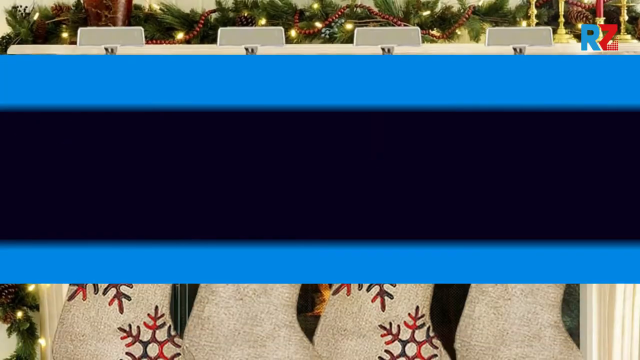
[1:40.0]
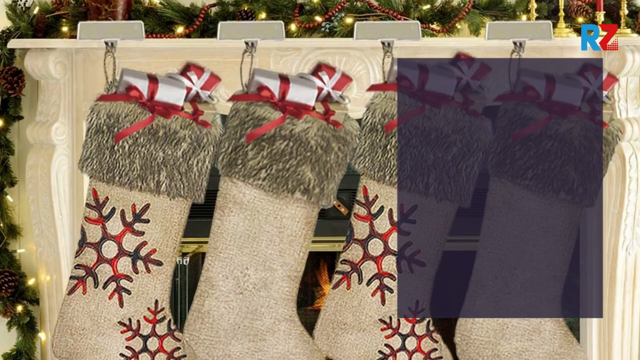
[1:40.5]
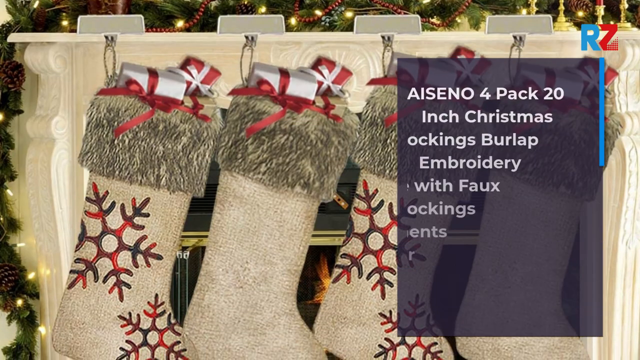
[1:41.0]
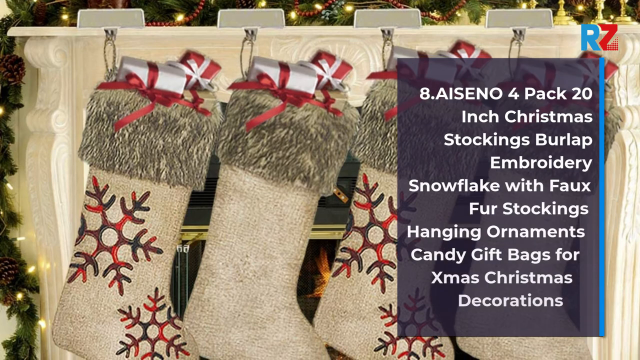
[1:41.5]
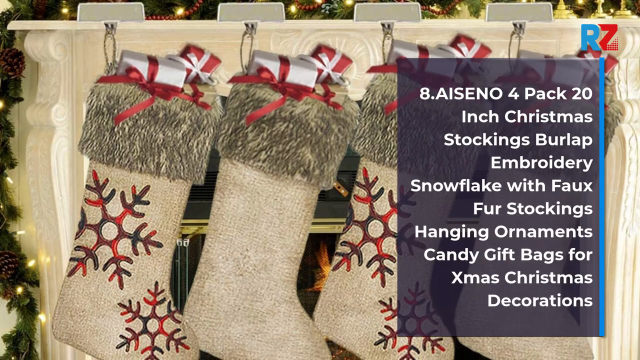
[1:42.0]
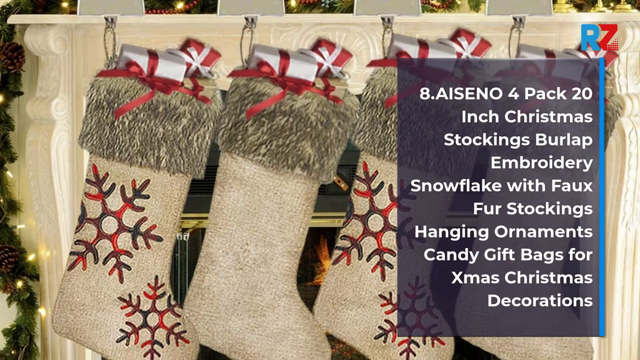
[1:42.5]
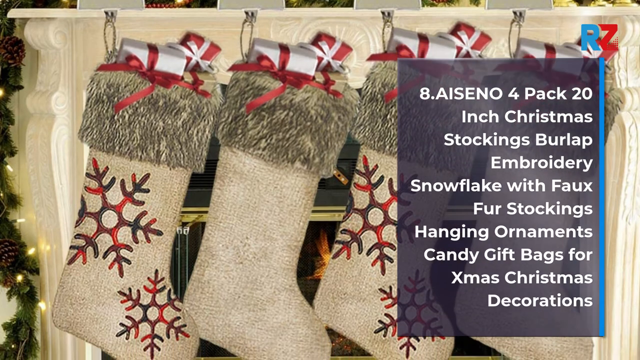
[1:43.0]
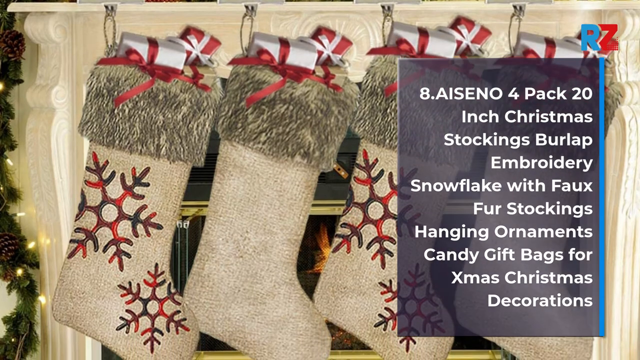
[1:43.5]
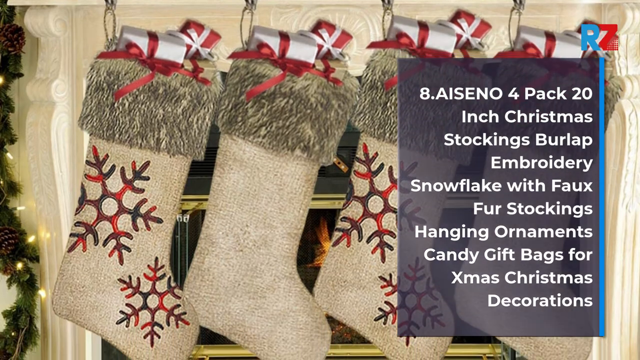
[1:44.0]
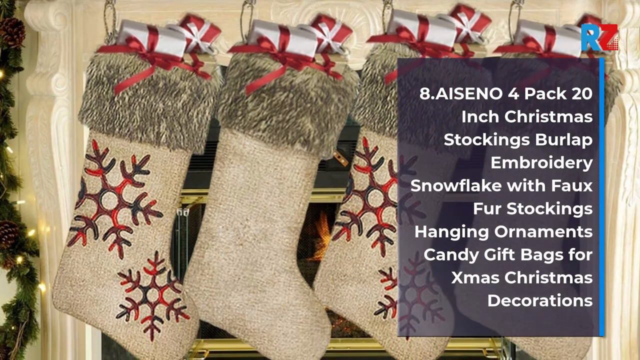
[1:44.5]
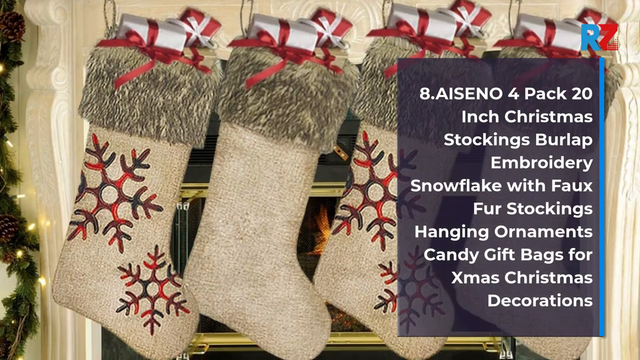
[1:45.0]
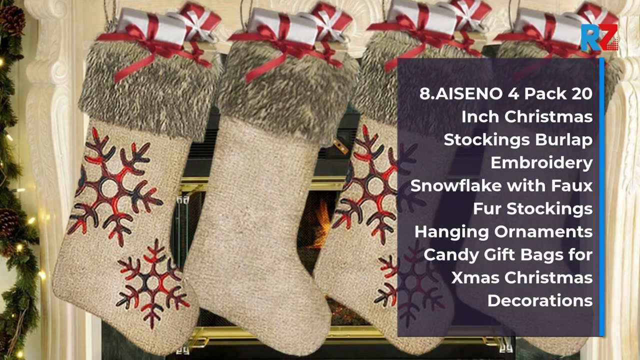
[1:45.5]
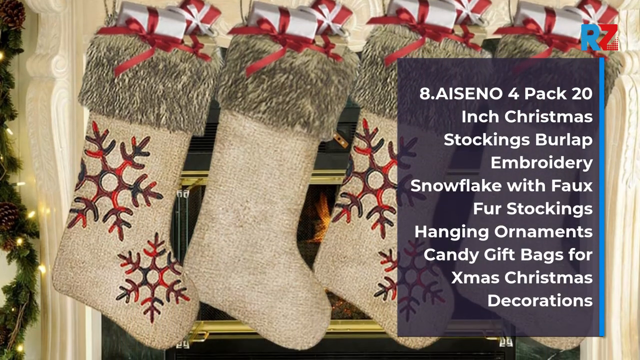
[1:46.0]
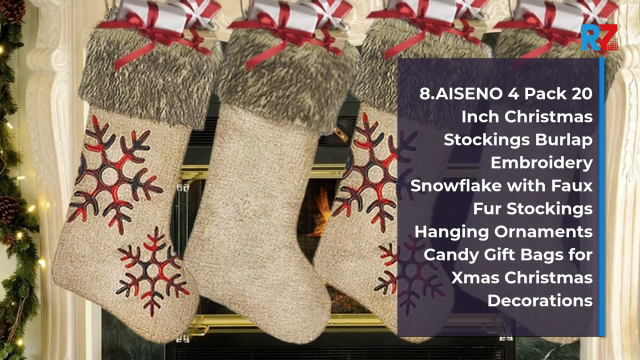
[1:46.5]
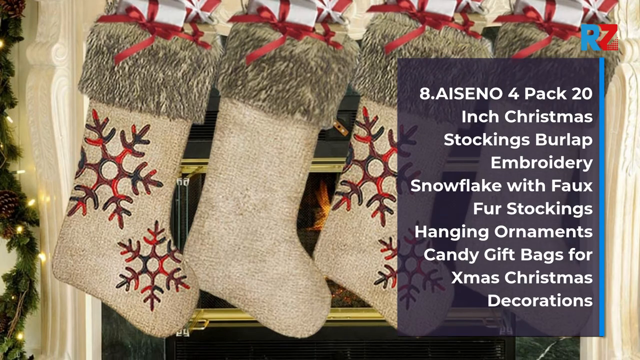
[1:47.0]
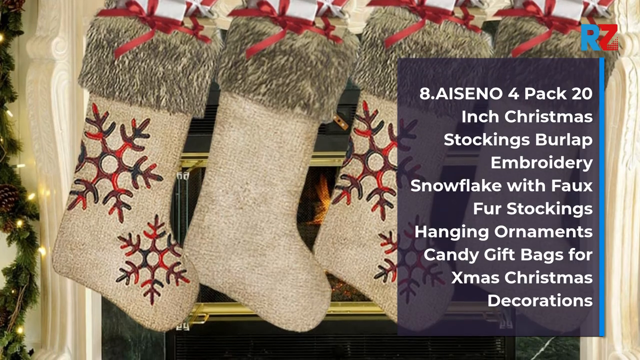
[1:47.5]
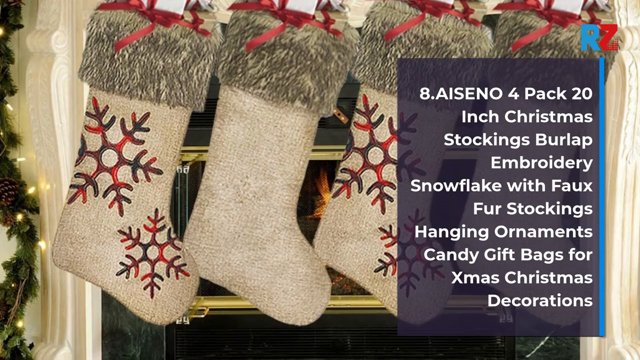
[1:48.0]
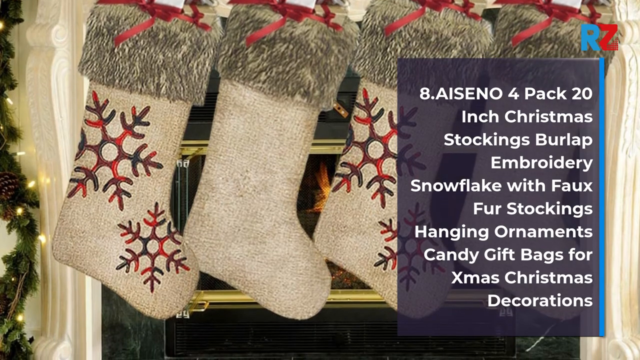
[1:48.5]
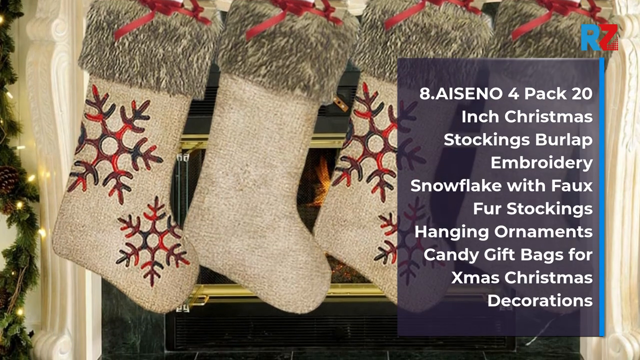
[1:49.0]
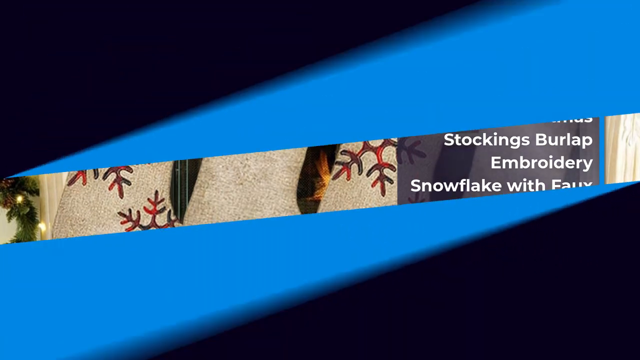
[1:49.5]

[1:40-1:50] Number eight is the Isenno four pack 20 inch Christmas stockings, burlap embroidery snowflake with fox fur, hanging ornaments, candy gift bags for Xmas decorations. They look gold and look like they are made out of hay. The fake fur on top looks kind of like a wolf's wool. The snowflakes are in Christmas colors, dark red and dark green. Number 6 is a Le Pepe Christmas stocking set of 4 large Xmas stockings, 18 inch, Christmas tree decoration with Santa, snowman, reindeer, gift holding, bag candy.